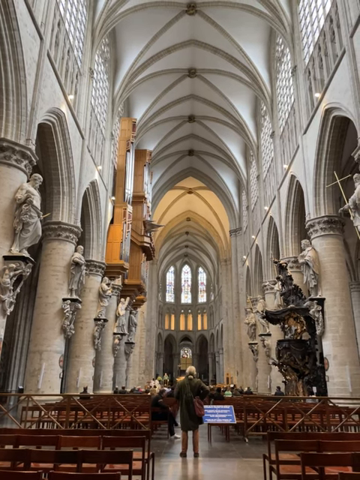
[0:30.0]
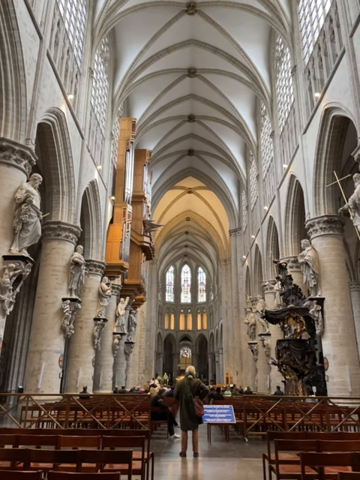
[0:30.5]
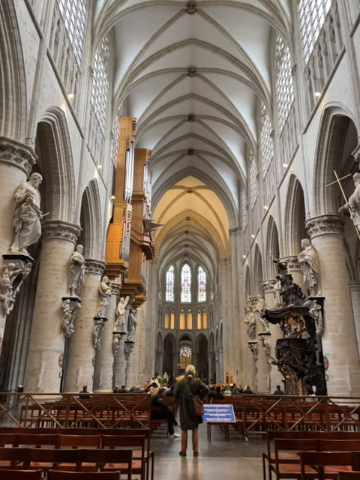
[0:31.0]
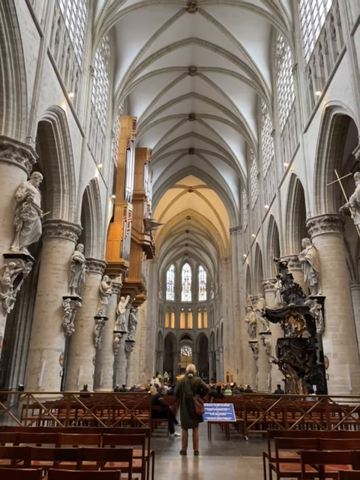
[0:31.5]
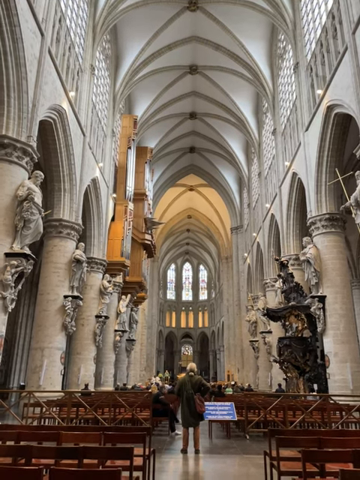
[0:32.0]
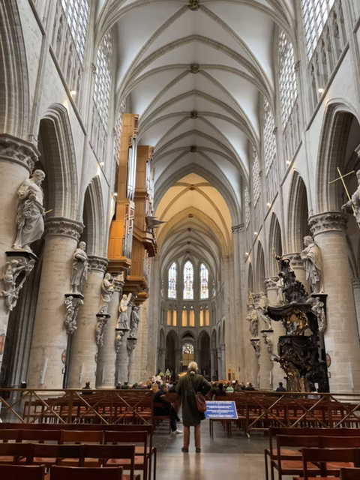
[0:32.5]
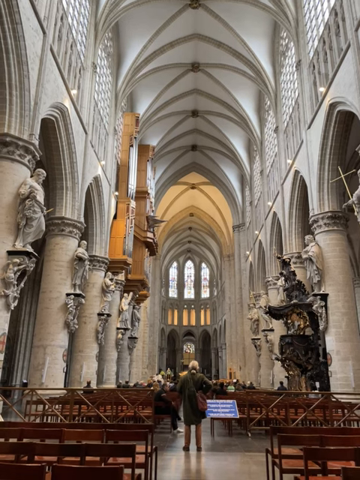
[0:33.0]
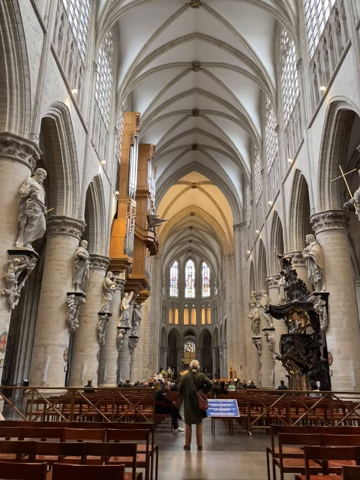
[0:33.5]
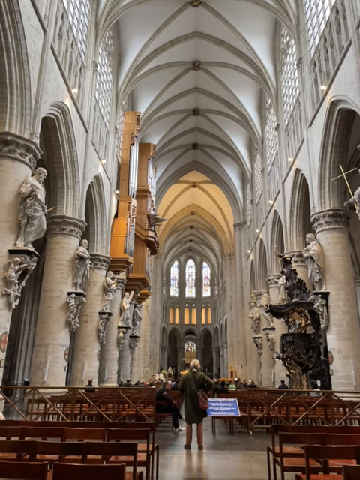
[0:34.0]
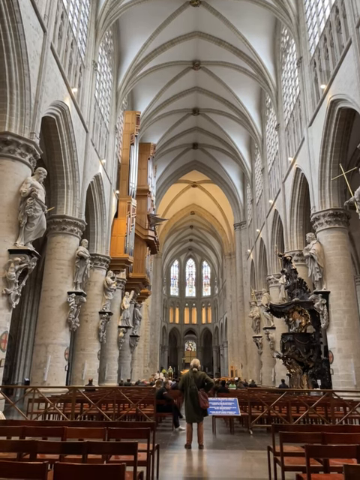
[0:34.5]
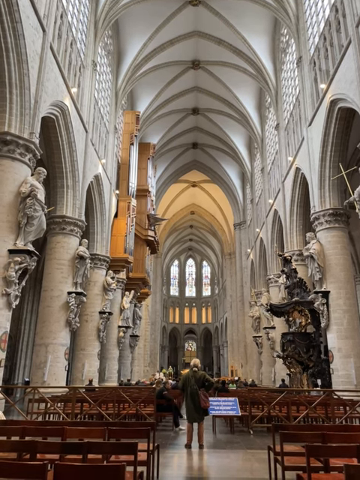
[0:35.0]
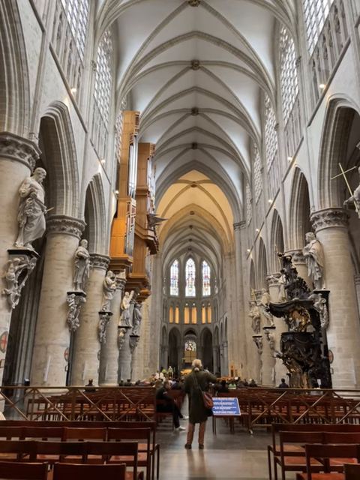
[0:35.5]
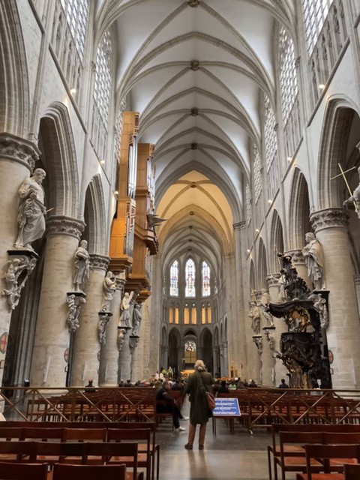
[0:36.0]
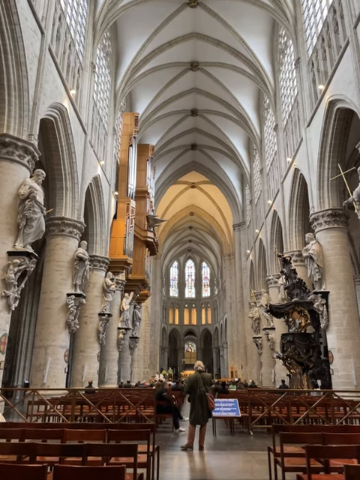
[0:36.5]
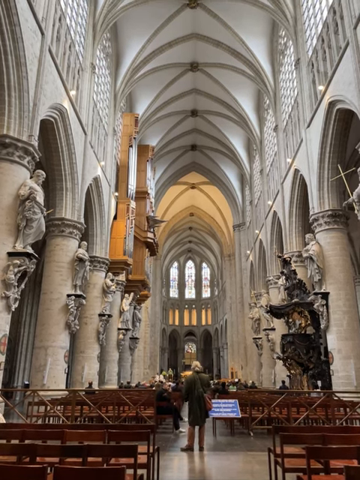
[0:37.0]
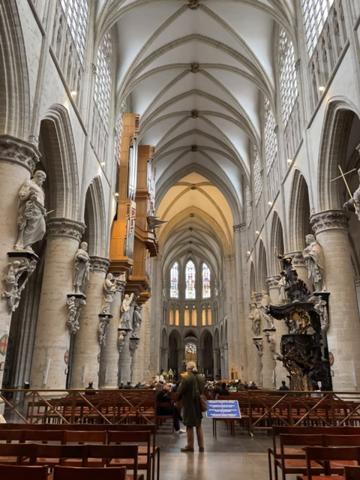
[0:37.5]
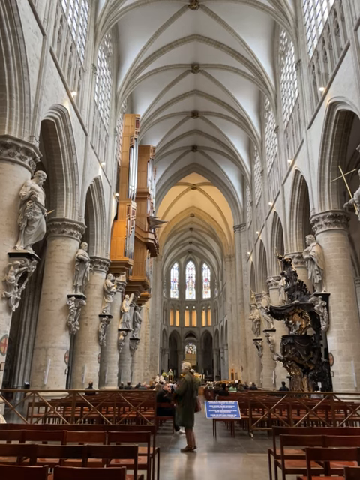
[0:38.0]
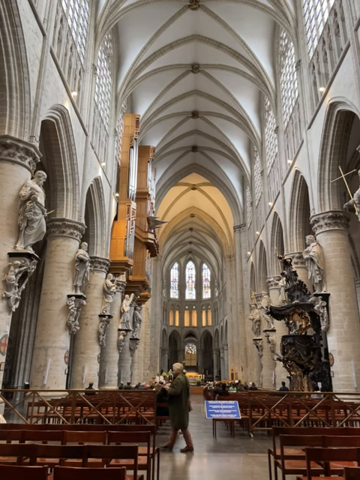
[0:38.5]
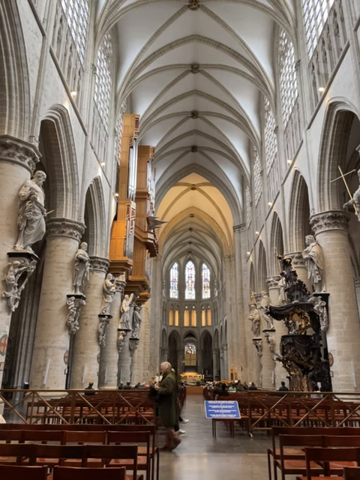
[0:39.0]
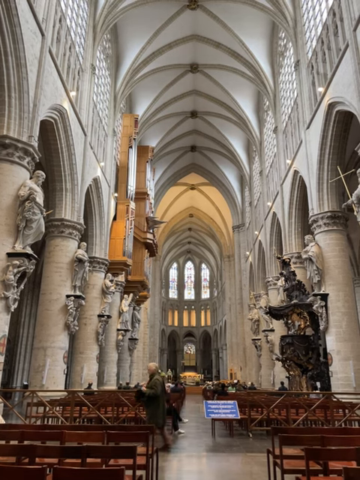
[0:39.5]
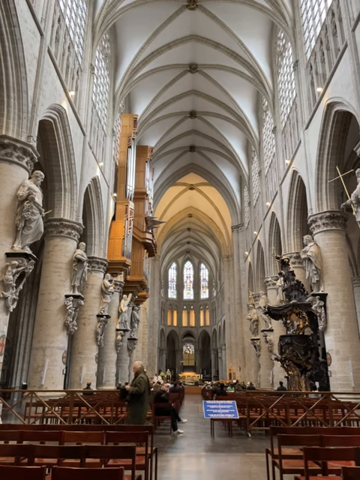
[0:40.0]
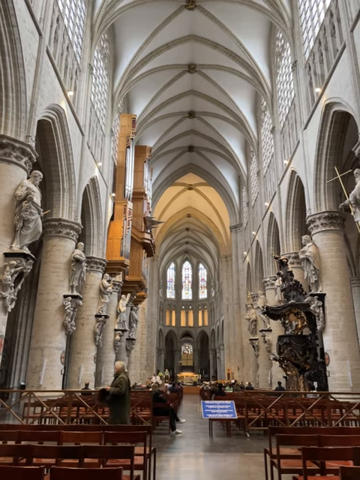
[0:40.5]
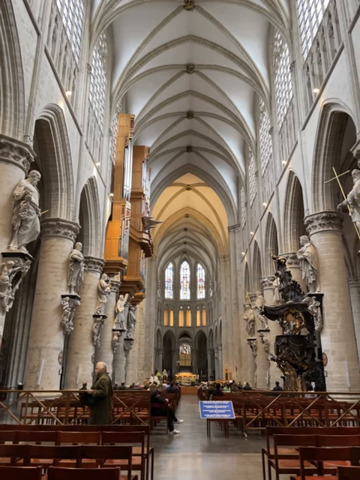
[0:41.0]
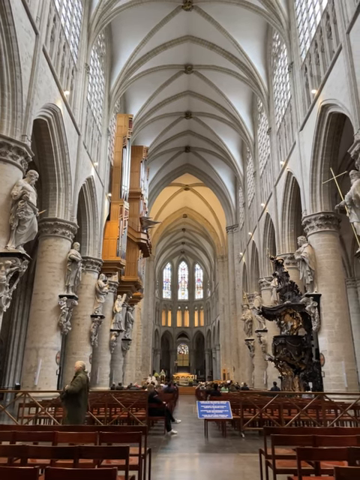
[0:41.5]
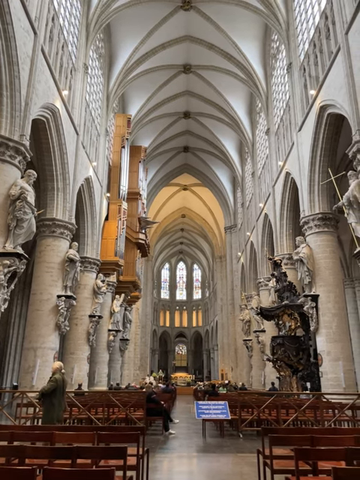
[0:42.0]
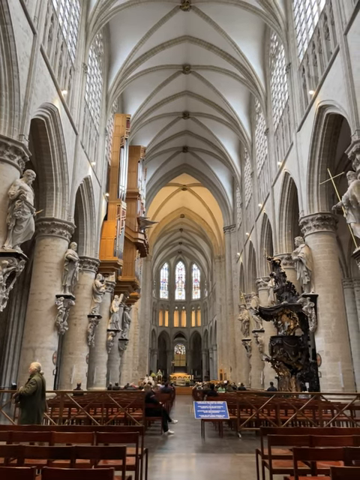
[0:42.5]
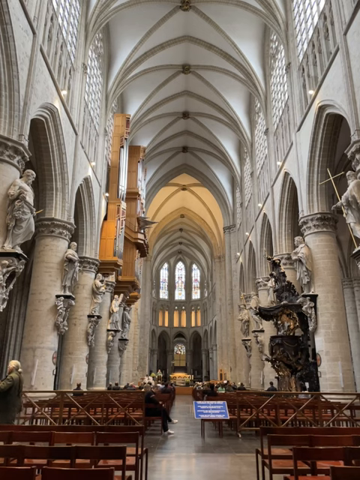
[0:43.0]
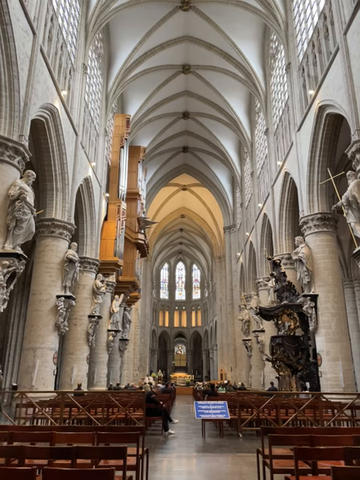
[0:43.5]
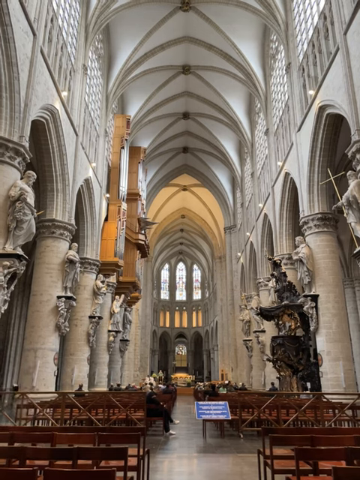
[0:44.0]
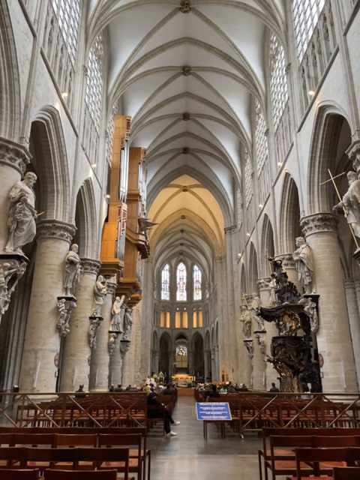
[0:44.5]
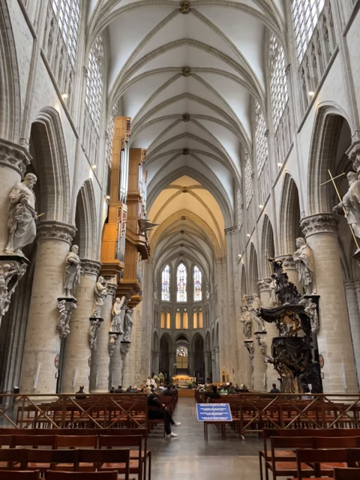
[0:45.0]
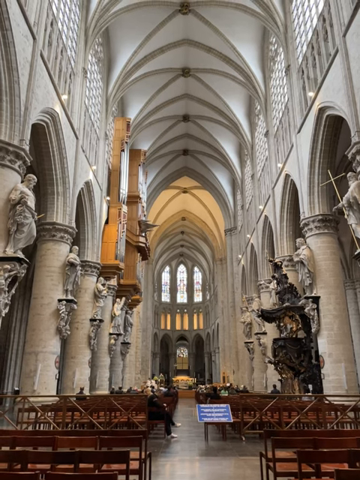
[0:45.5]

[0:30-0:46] A group of people sits in the brown pews of a cathedral. At the back of the pews stands a person who appears to be in their 60s, wearing a gray jacket, with gray hair tied into a bun and a brown pouch over the shoulder. This person looks toward the front of the cathedral, then slowly walks toward the left side of the cathedral and out of the shot. In certain sections there is an orange-like light beneath the three large arched glass windows near the front of the cathedral, and below those are about six smaller arched openings with orange light in them.